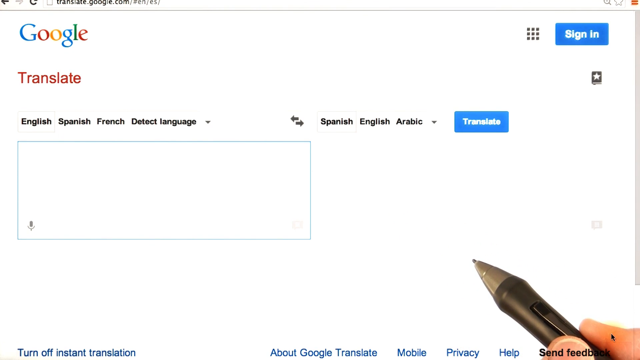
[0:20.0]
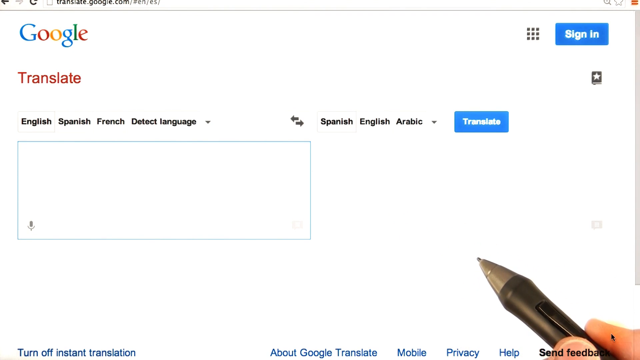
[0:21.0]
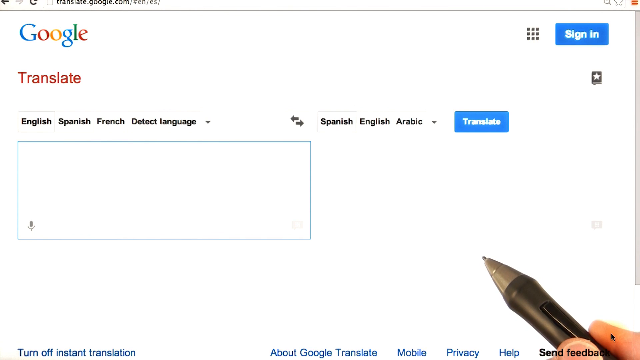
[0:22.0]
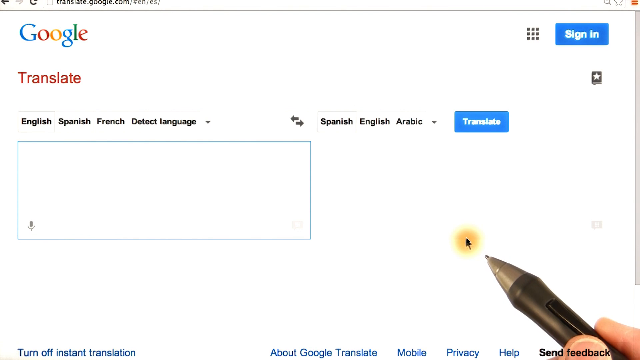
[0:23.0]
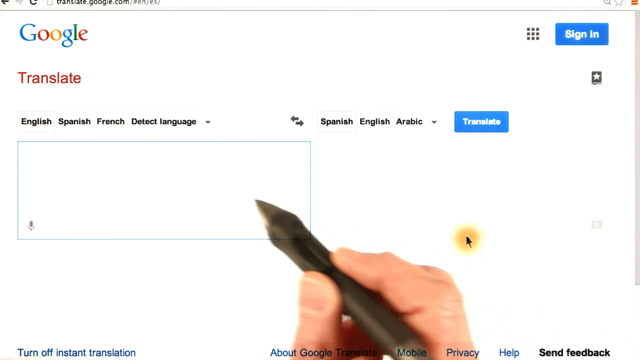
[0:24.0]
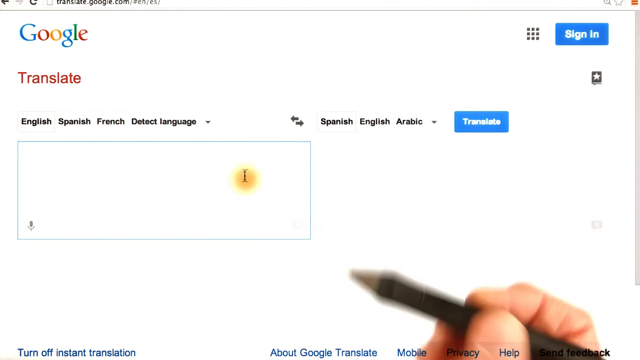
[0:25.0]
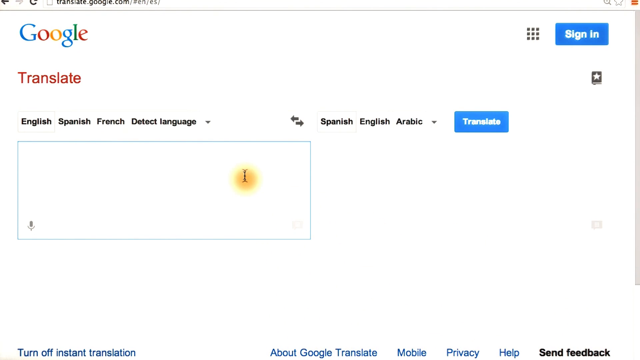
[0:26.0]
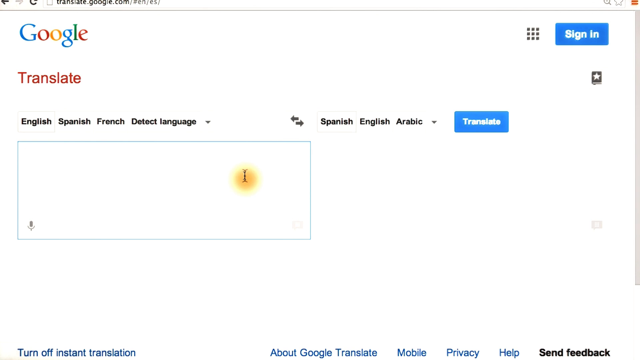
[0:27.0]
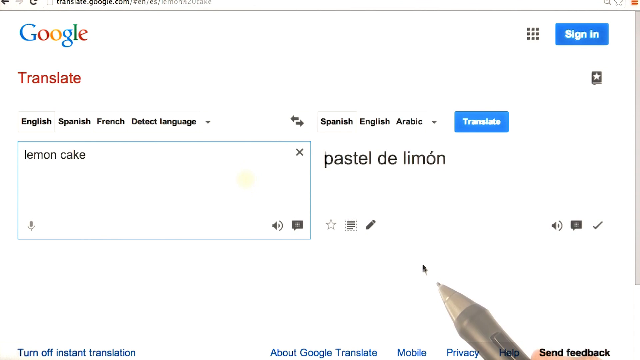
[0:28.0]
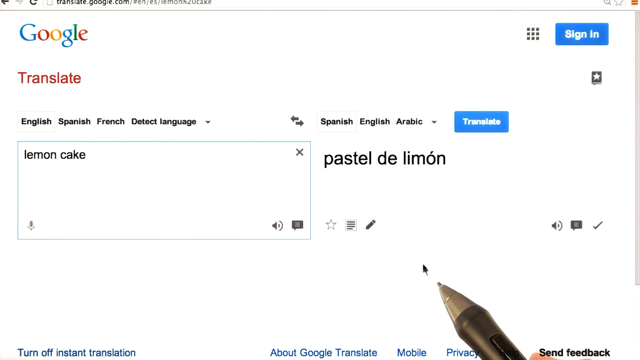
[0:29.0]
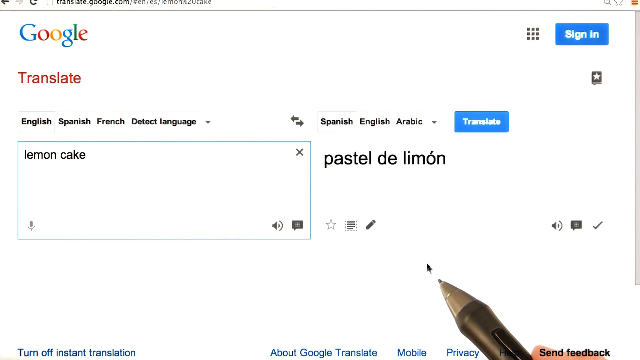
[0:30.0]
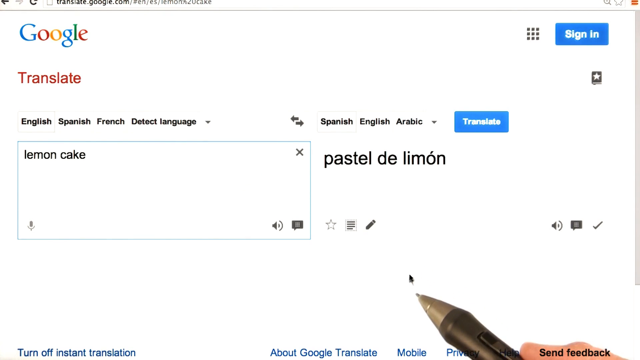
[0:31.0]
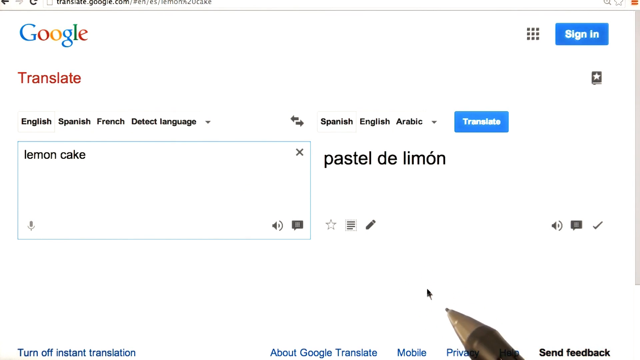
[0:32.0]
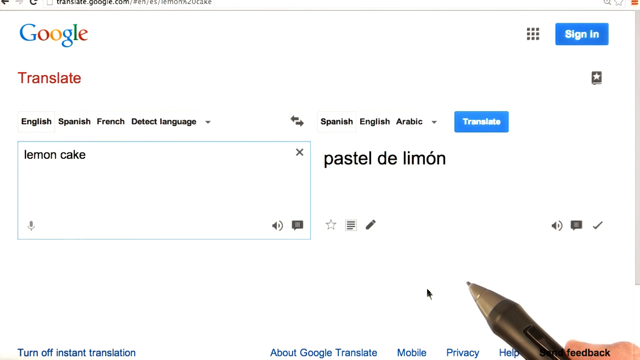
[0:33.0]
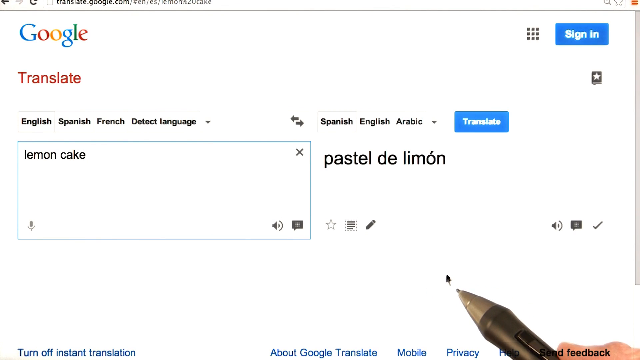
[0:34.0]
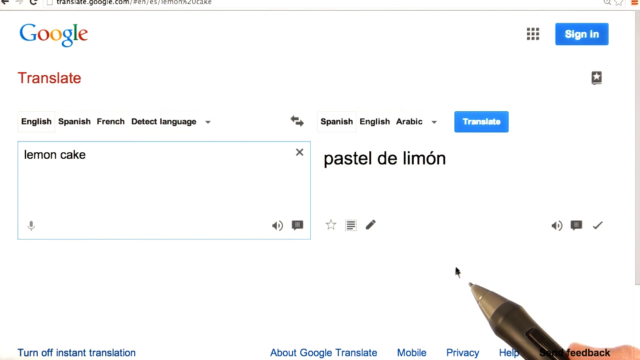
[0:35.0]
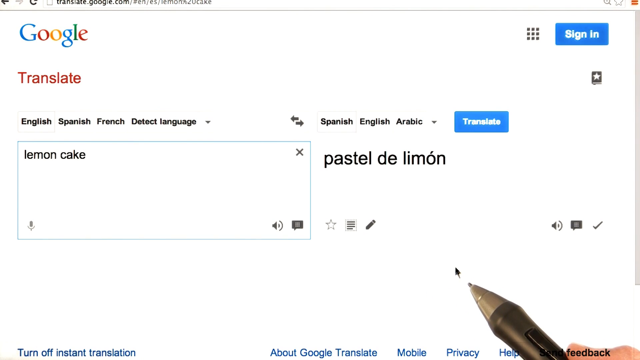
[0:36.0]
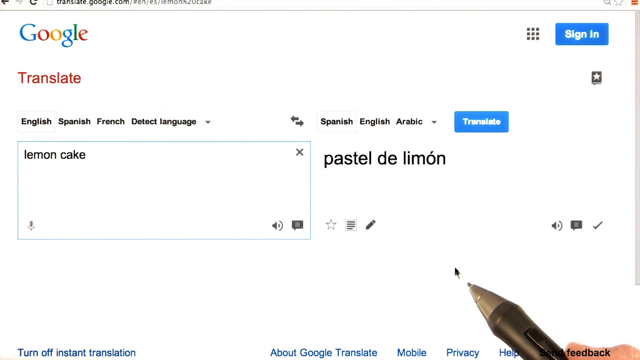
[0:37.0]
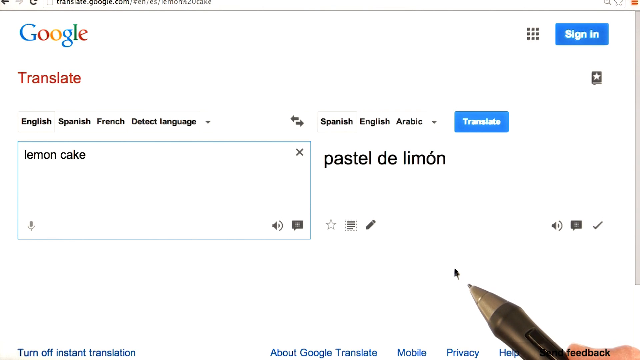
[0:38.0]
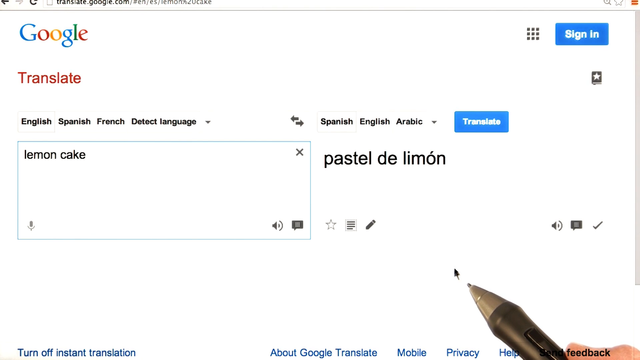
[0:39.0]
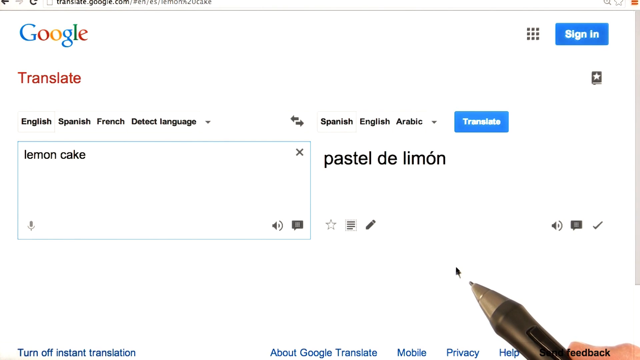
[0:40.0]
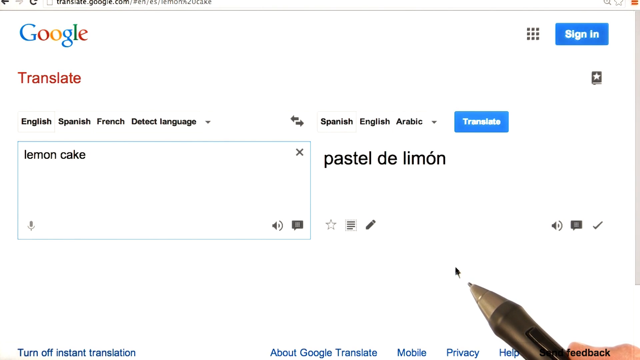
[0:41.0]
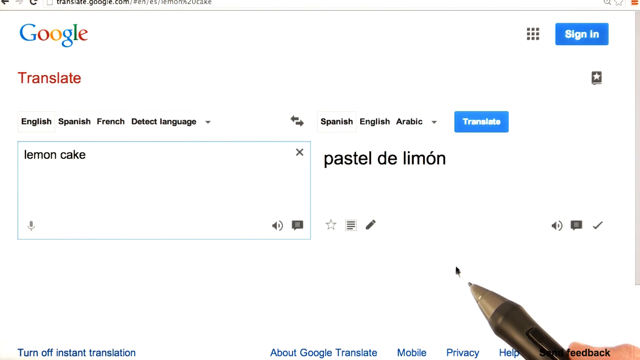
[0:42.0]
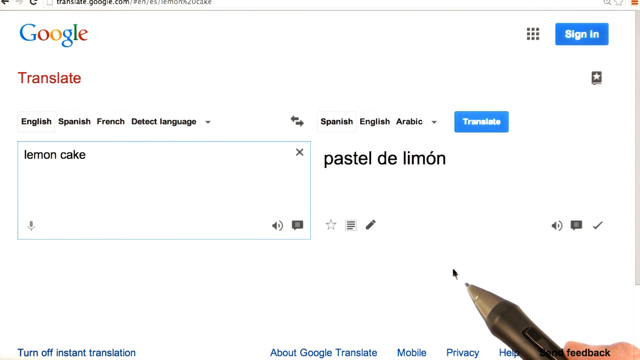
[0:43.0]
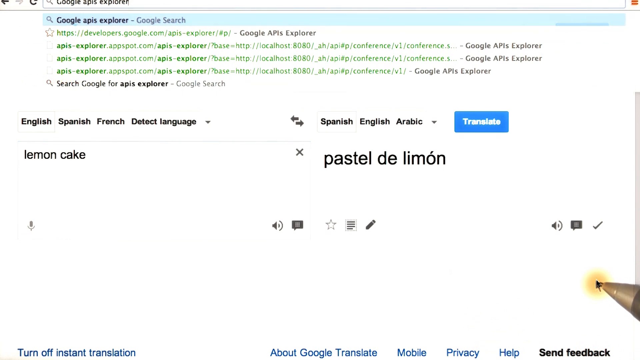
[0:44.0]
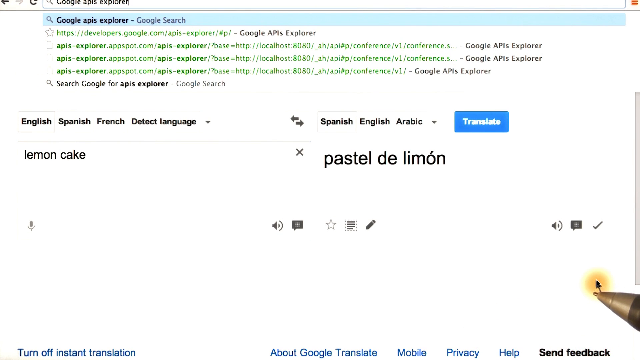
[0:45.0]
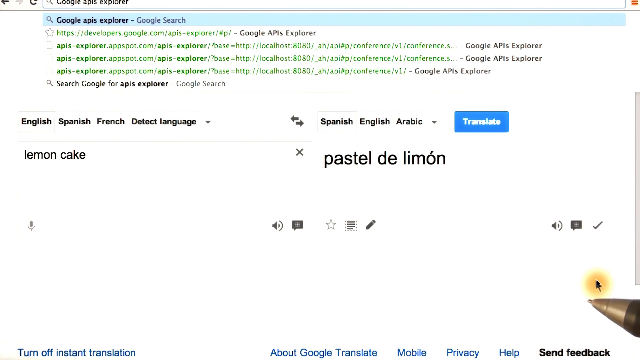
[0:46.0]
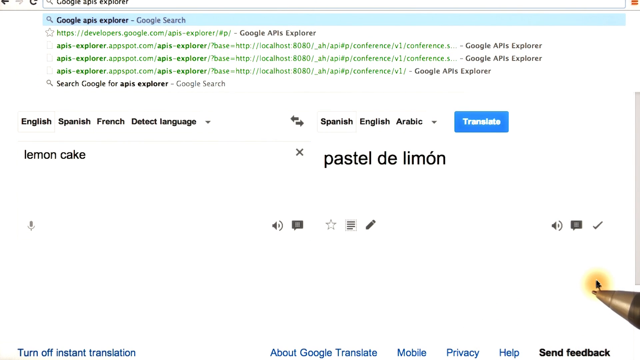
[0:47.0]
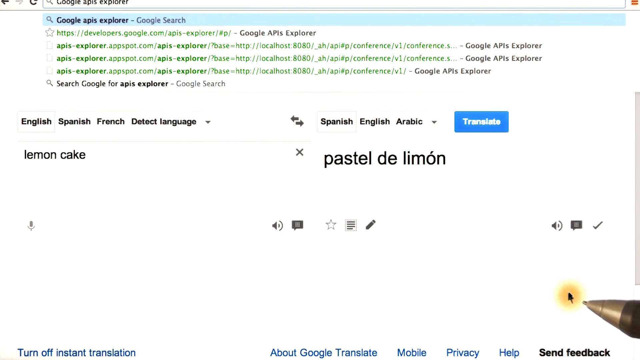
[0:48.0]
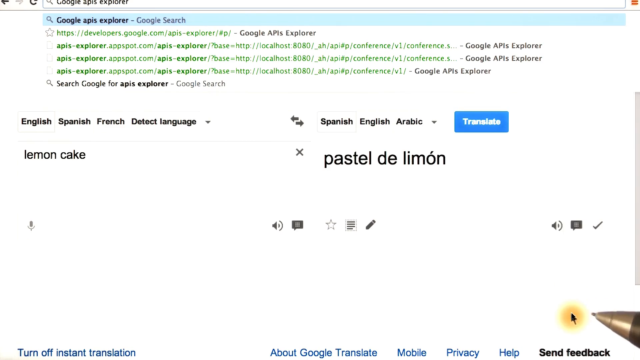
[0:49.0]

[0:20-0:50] The translate.google.com page for Google Translate is on screen with no text entered yet, and the From Language box is highlighted with a blue frame. At the bottom right, a pen held by a human right hand hovers over the screen. The pen touches the screen and a black cursor with a yellow glowing circle around it appears. The hand moves to the blue Translate From box, moves the cursor there, and the text "Lemon Cake" is pasted into the left-hand prompt box. On the right-hand side the translation instantly appears, apparently into a Latin language such as Spanish: "Lemon Cake" is translated as "Pastel de Limon". The pen continues to hover over the screen, and the black mouse cursor follows it in the bottom right-hand corner, with no other movement on the screen. The view then changes: "Google API Explorer" has been typed into the search bar, and a drop-down shows various URLs related to Google API Explorer.